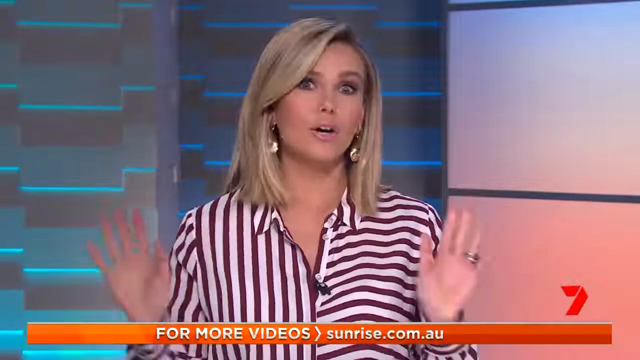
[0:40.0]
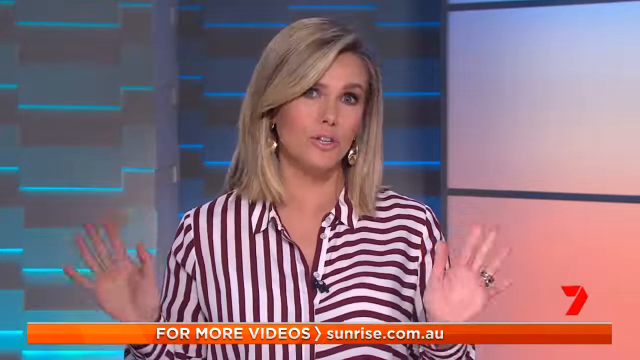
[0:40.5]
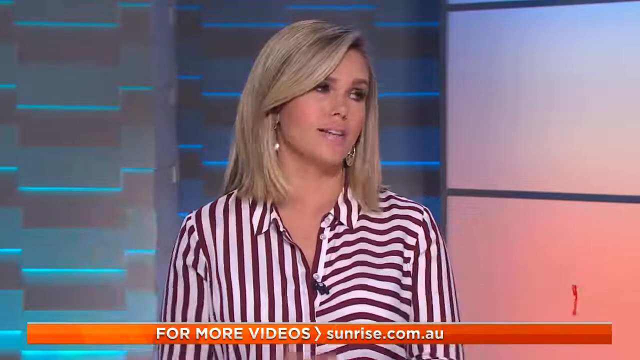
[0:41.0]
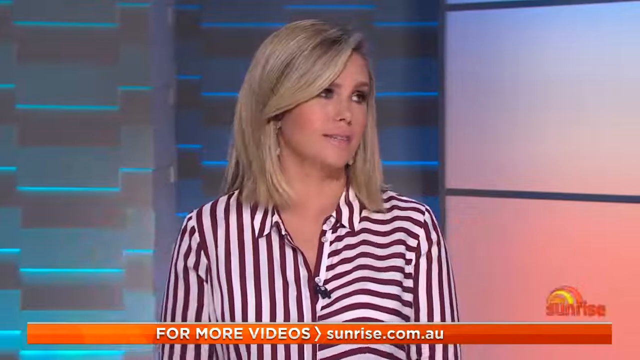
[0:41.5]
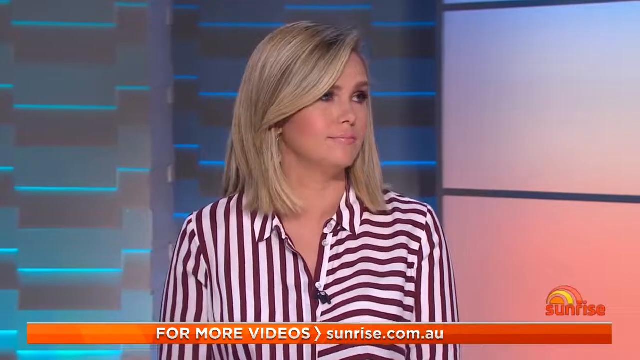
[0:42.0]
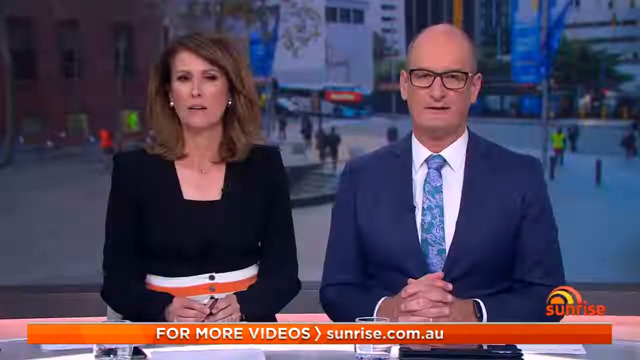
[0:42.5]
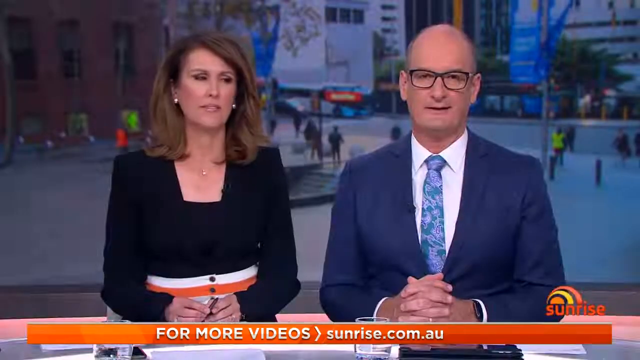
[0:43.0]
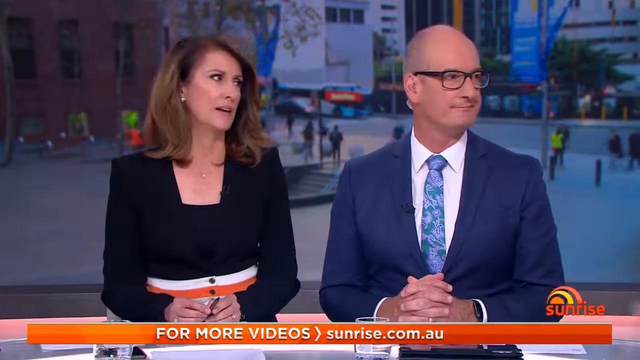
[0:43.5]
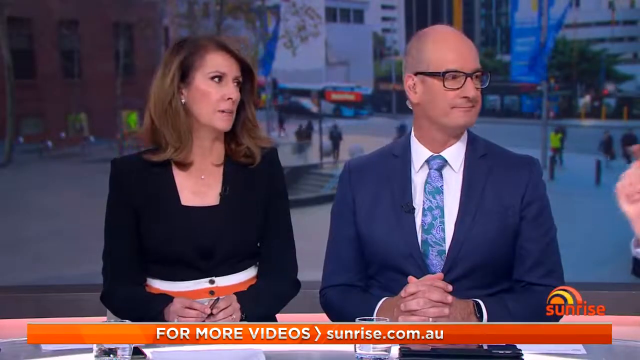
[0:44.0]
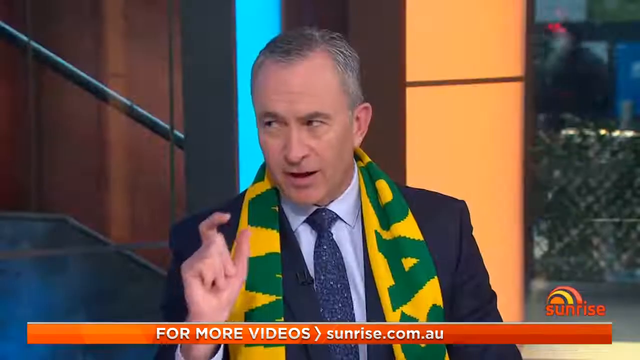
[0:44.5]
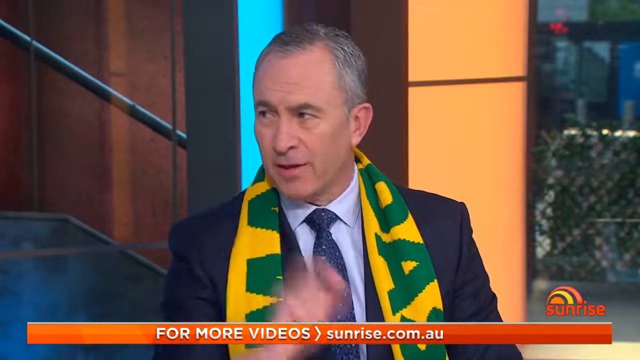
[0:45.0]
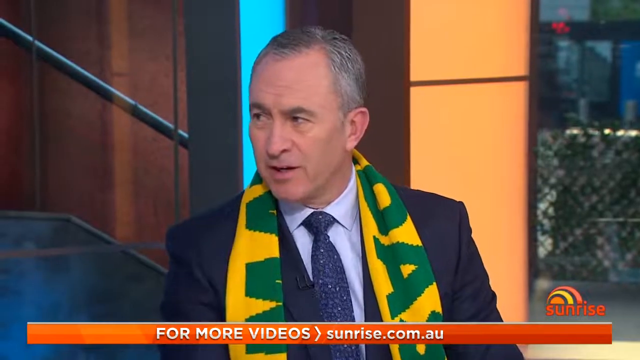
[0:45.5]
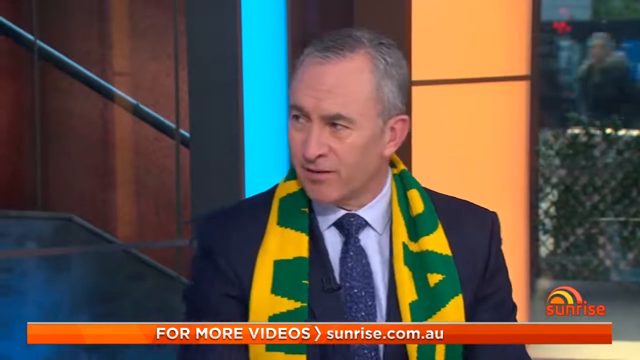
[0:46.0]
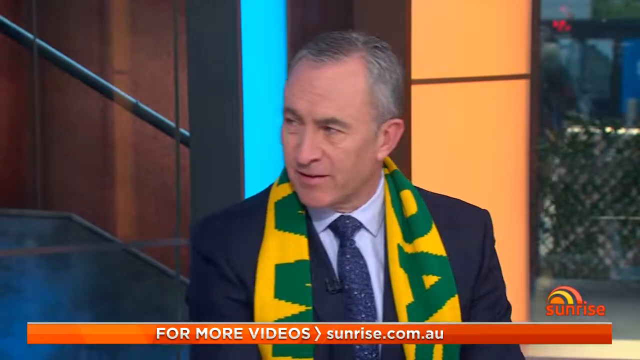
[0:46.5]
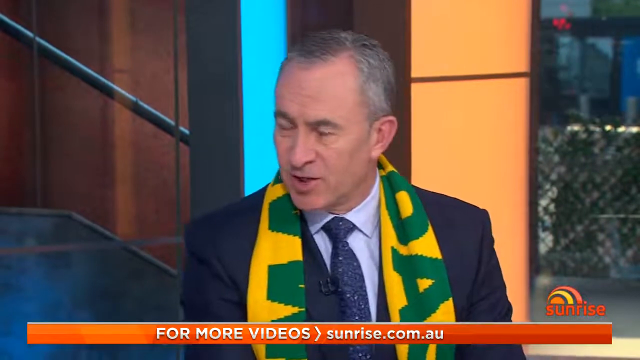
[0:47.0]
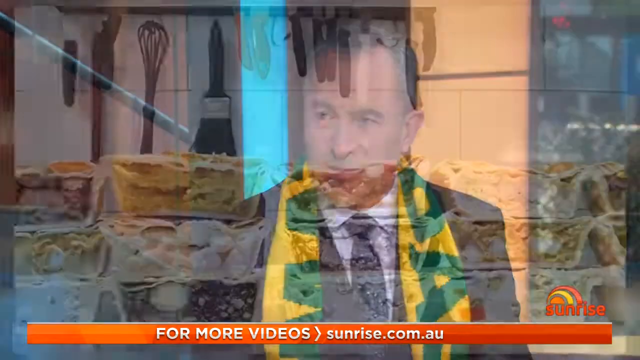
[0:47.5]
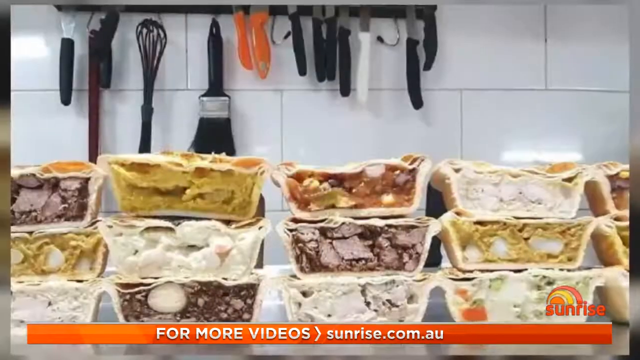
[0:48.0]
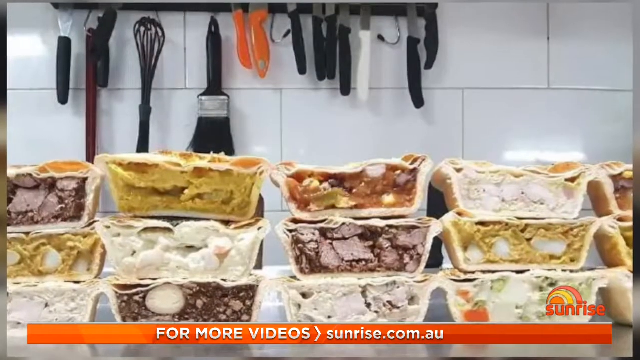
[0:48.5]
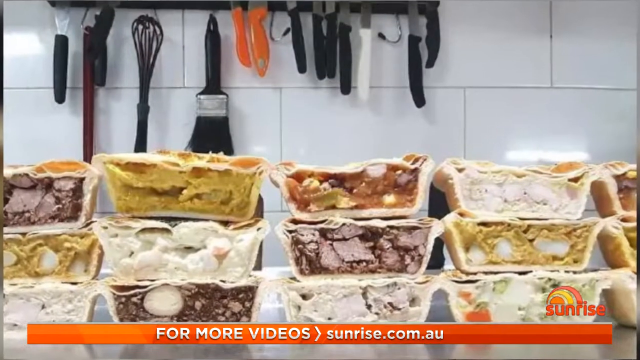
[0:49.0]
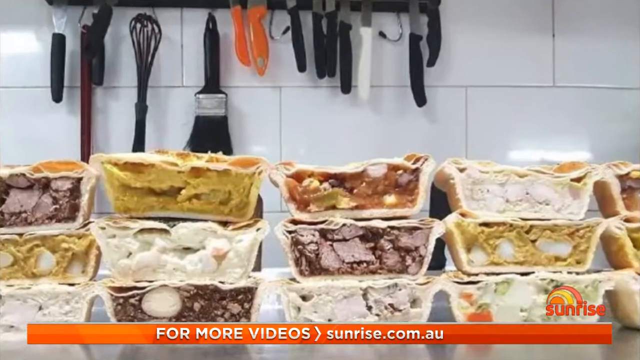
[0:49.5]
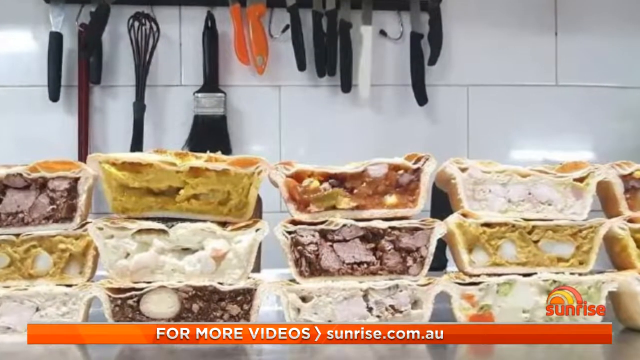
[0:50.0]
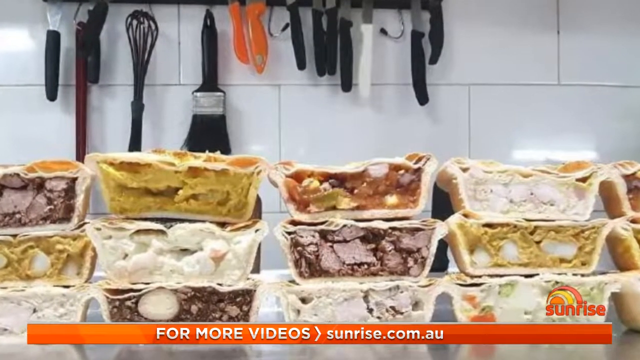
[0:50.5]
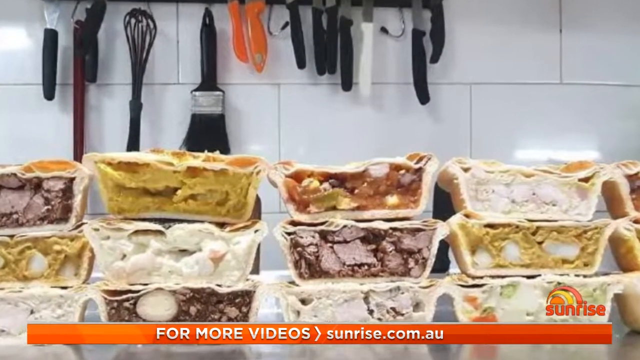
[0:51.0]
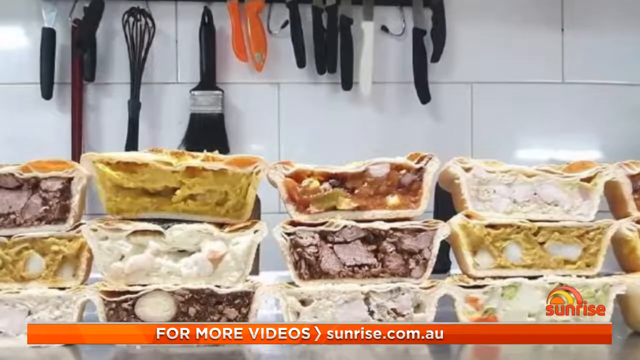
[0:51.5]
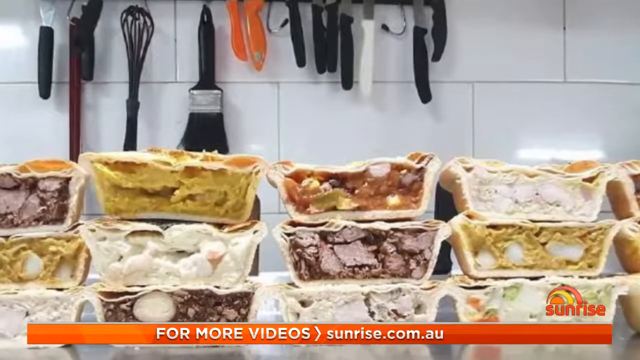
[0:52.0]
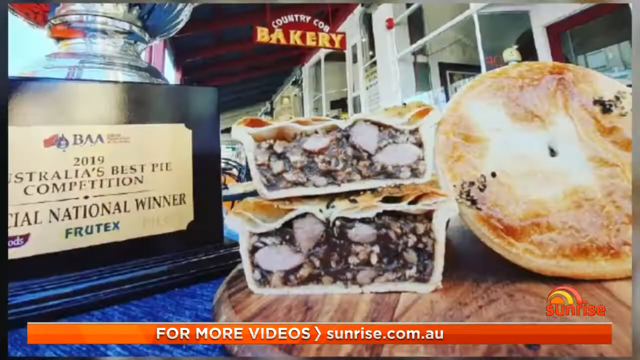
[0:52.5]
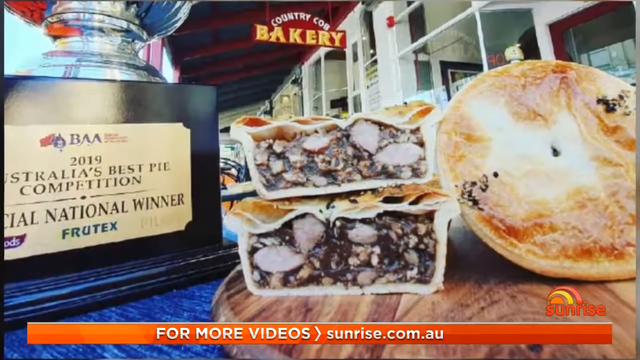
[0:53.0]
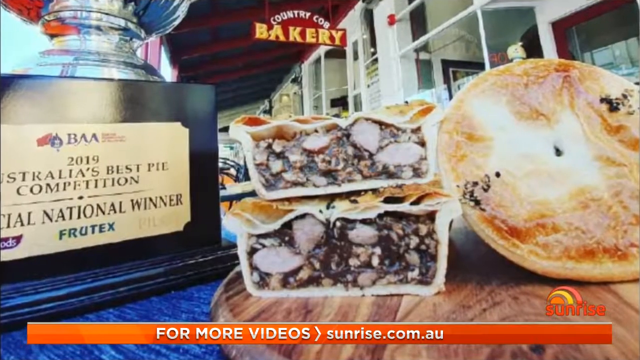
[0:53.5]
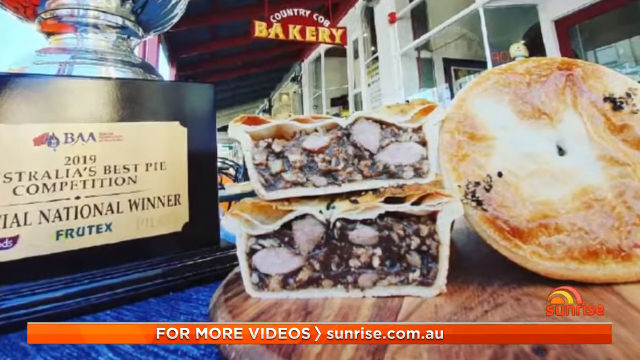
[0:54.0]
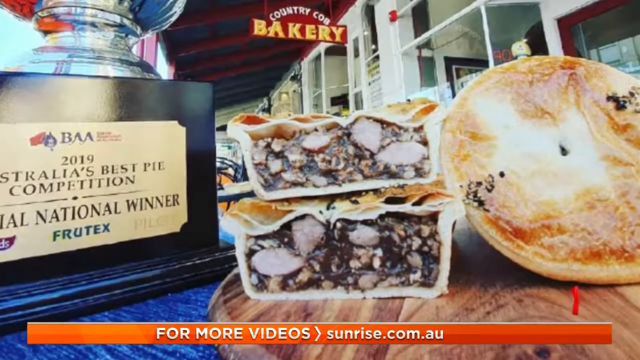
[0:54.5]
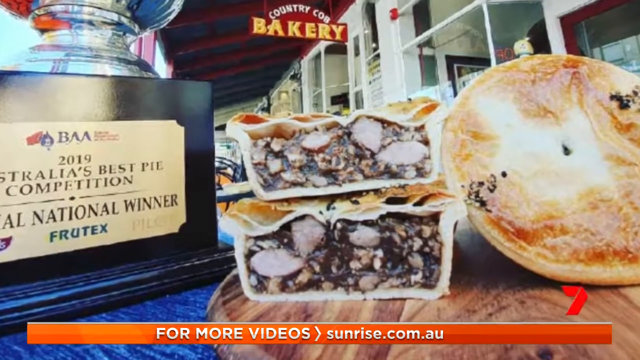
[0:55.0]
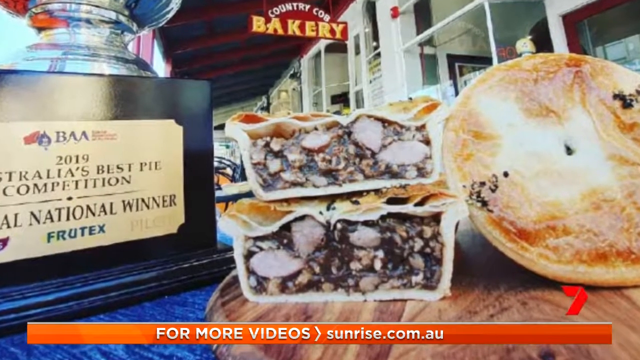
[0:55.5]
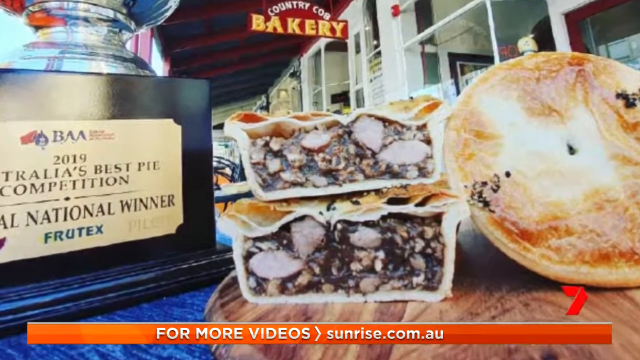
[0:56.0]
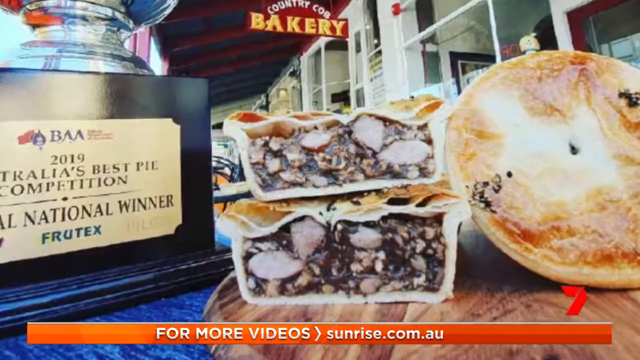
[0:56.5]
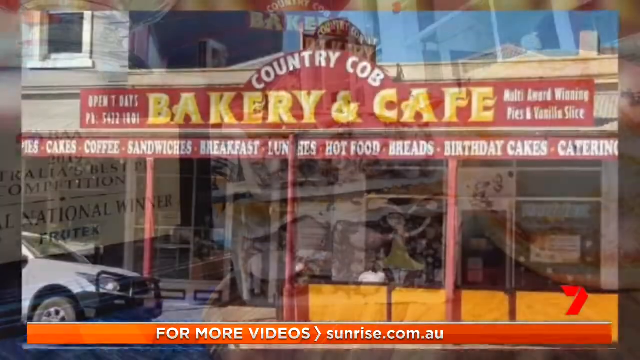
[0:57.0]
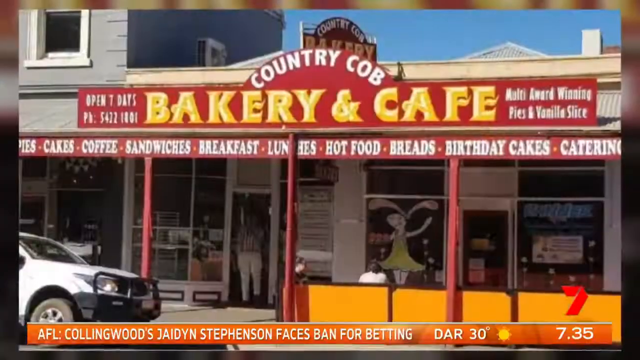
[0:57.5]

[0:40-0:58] The main presenter engages with the new guests in the studio: a woman in a black jacket with blonde hair, and a man with glasses, a navy tie and a navy blazer. They seem to be discussing the pie award as another man joins them. The pie is shown in a bakery with a trophy next to it, and the text on the trophy reads "2019 Australia's Best Pie Competition National Winner". The building of a bakery and cafe is shown, and inside is a man named Chan, the recipient of the Australia's Best Pie Award. The camera goes back to the studio, where the main female presenter is engaging with the three other guests.